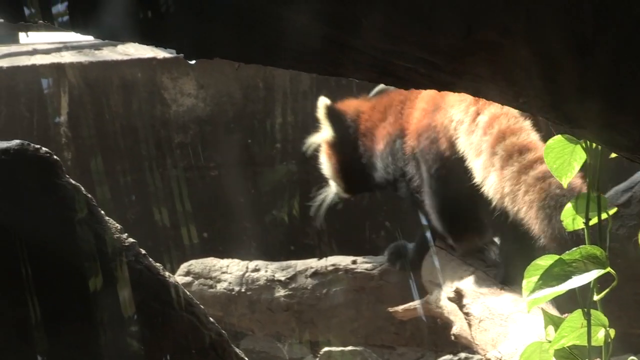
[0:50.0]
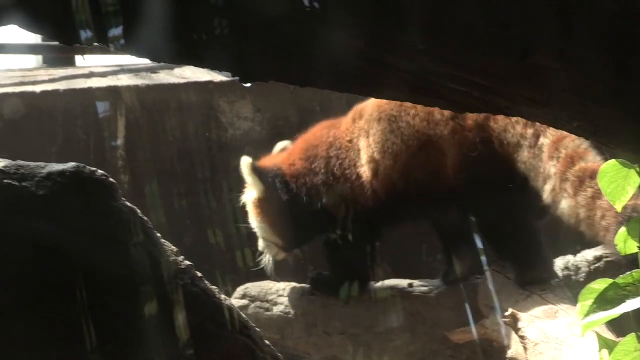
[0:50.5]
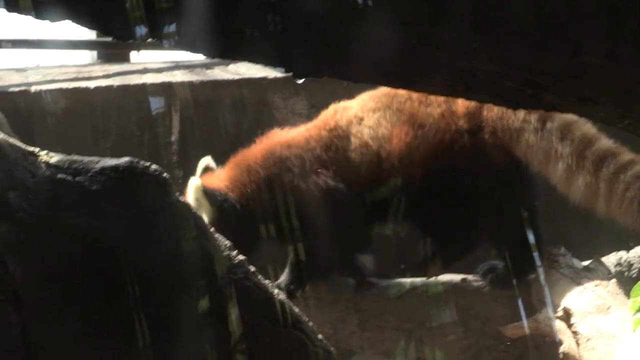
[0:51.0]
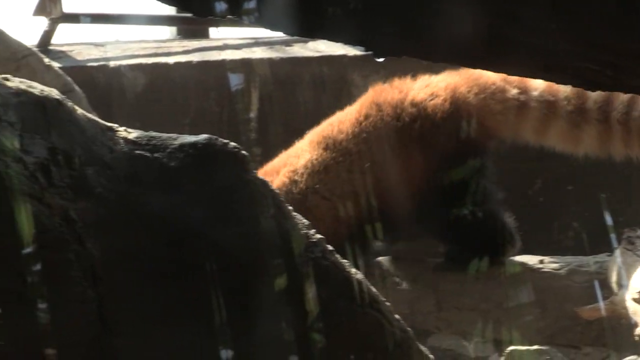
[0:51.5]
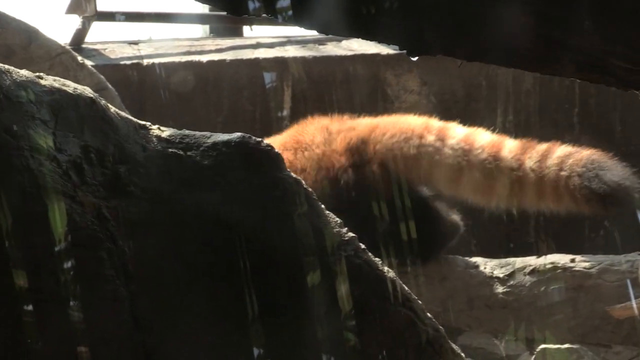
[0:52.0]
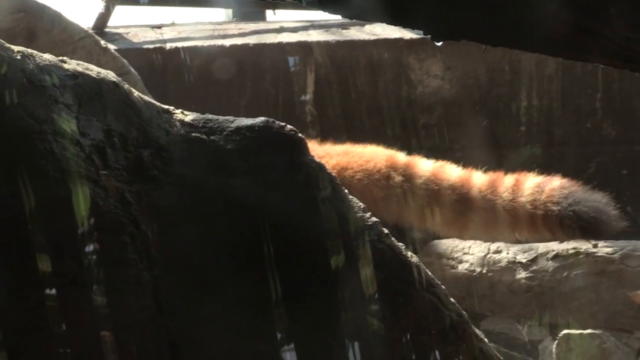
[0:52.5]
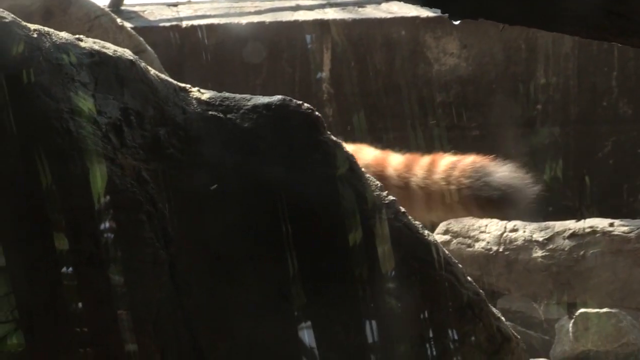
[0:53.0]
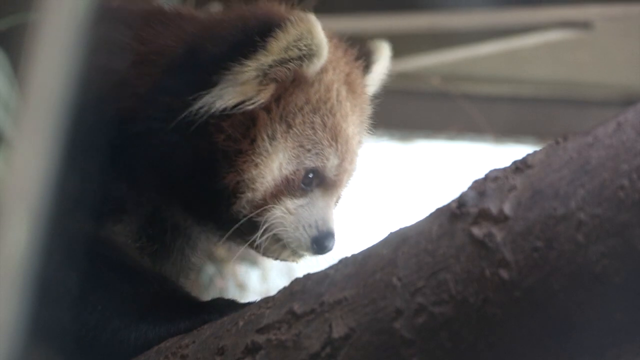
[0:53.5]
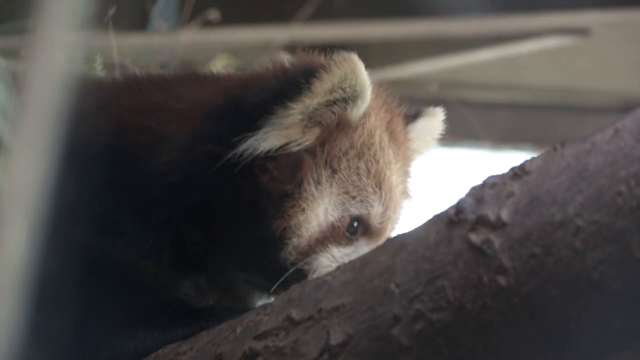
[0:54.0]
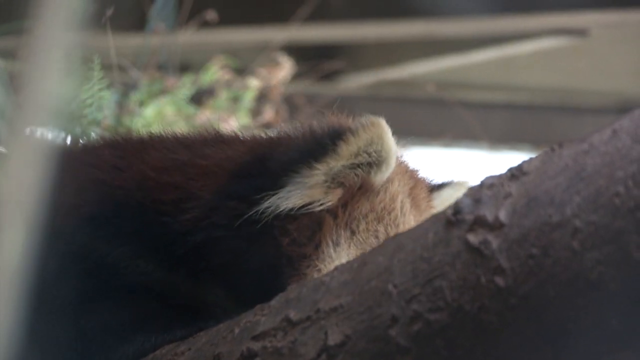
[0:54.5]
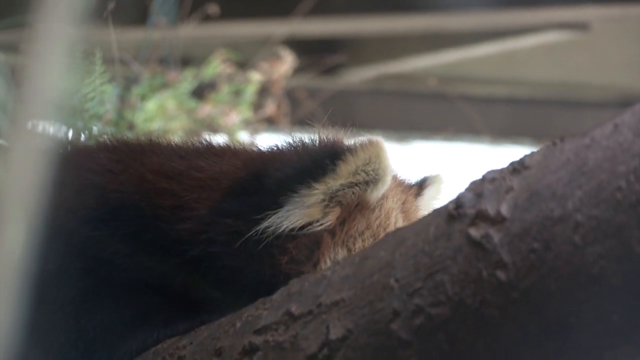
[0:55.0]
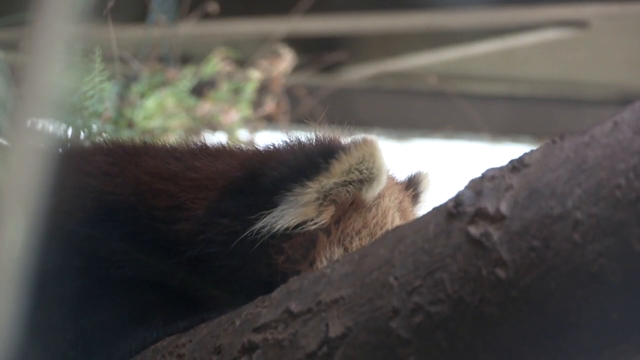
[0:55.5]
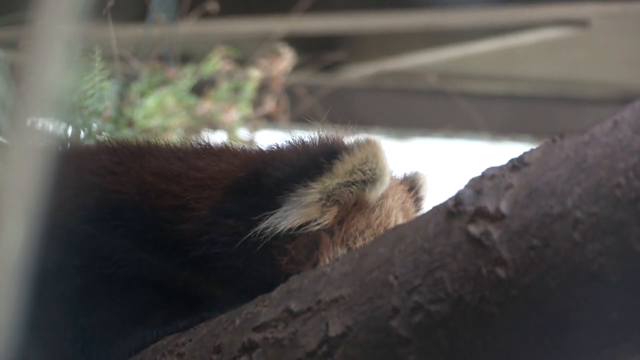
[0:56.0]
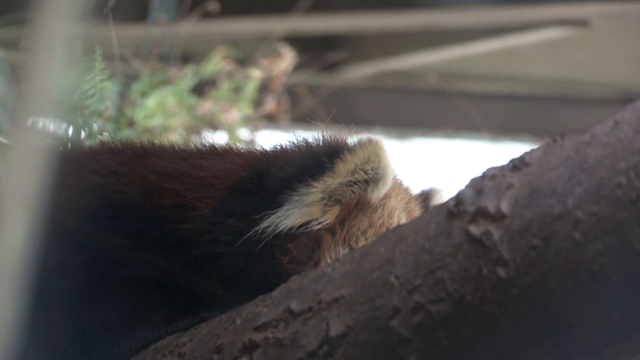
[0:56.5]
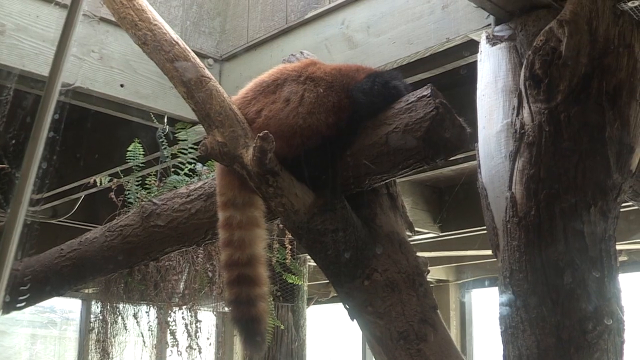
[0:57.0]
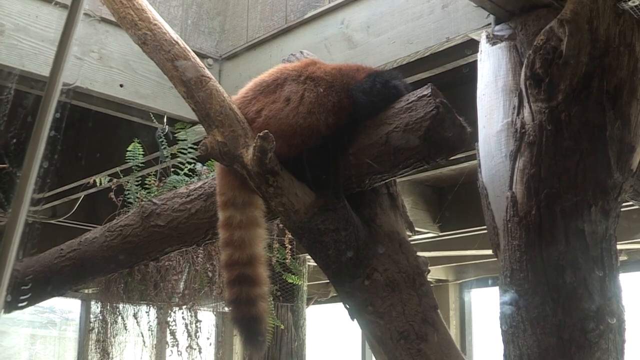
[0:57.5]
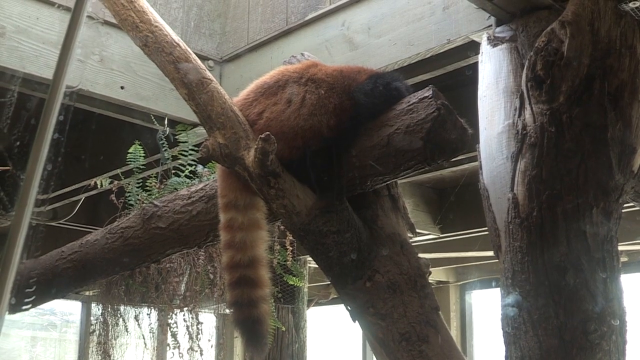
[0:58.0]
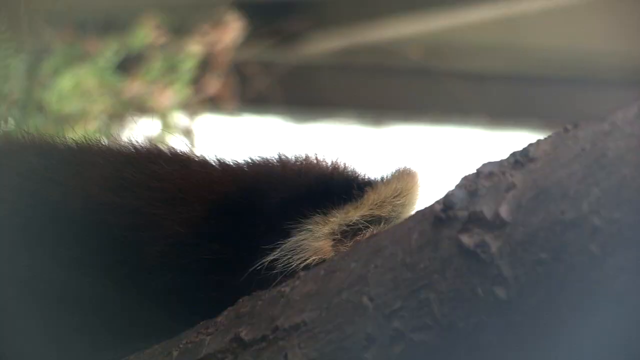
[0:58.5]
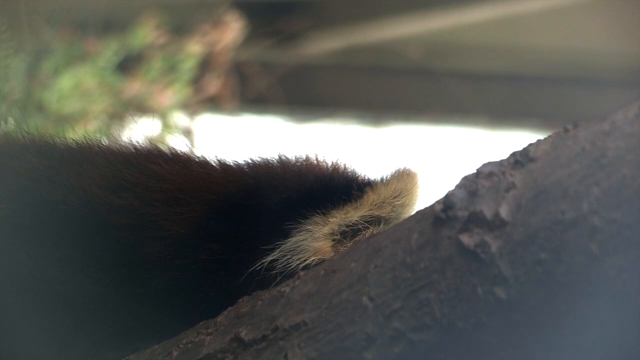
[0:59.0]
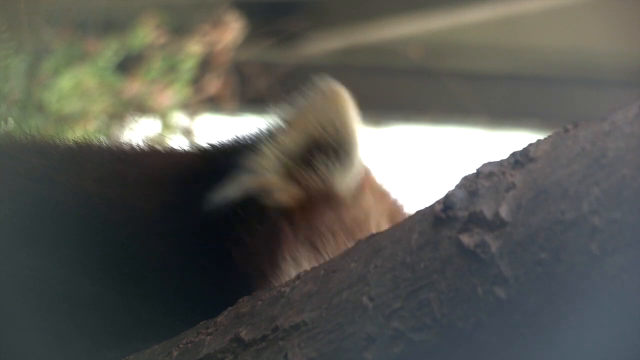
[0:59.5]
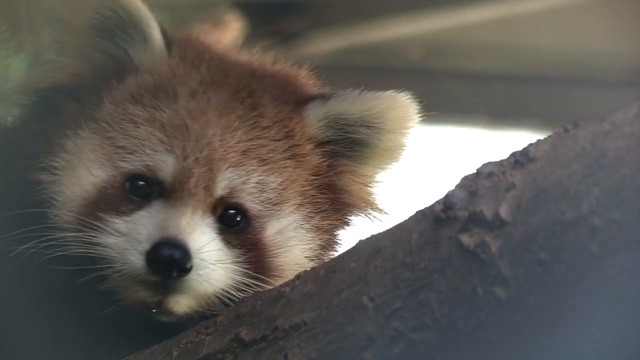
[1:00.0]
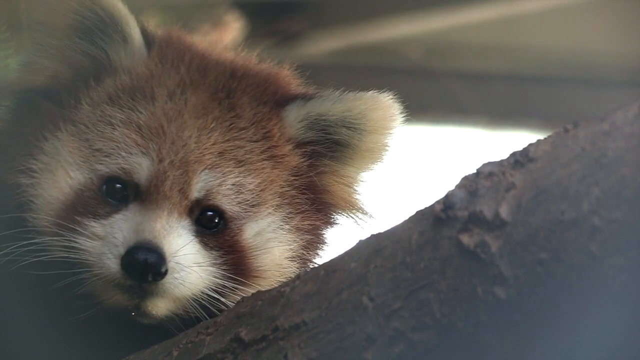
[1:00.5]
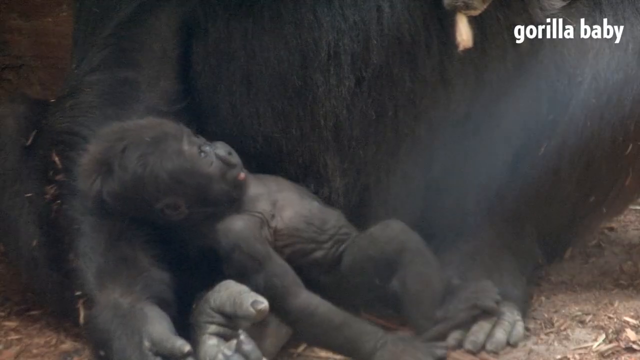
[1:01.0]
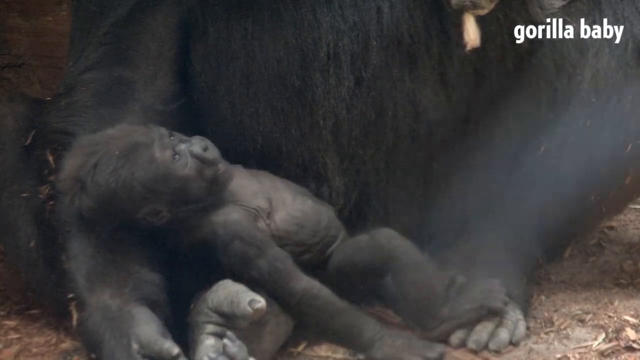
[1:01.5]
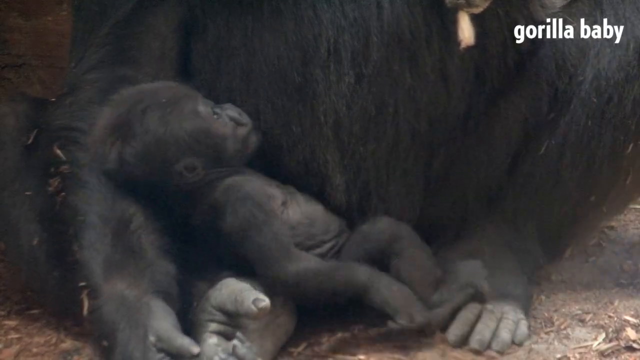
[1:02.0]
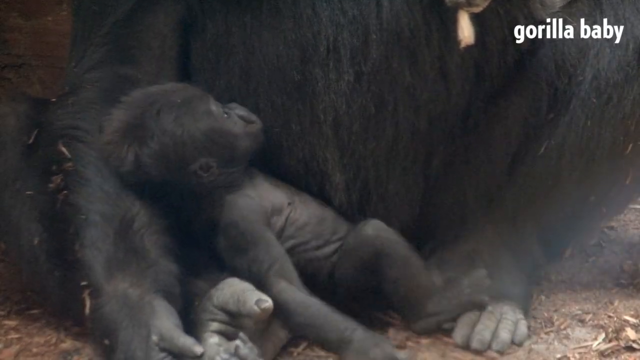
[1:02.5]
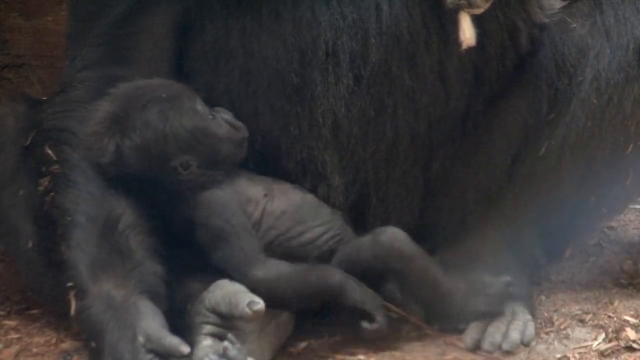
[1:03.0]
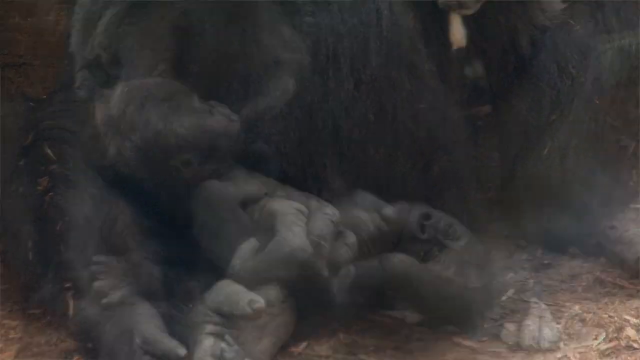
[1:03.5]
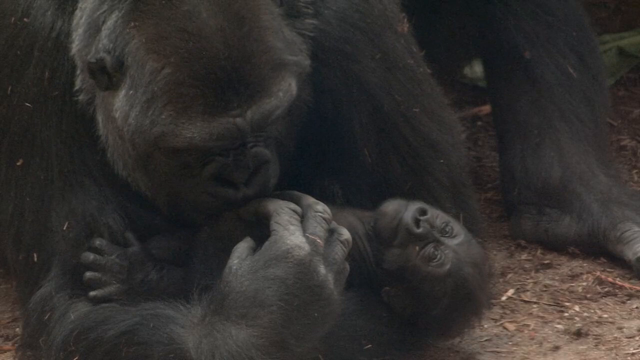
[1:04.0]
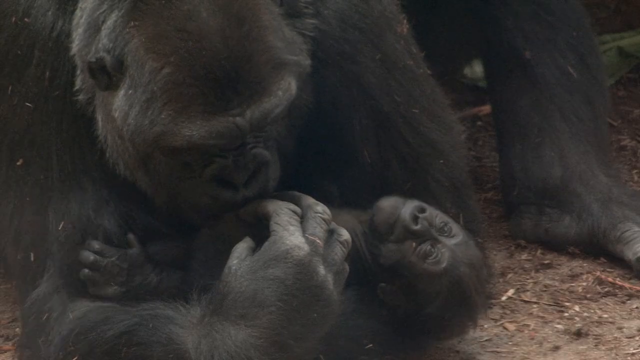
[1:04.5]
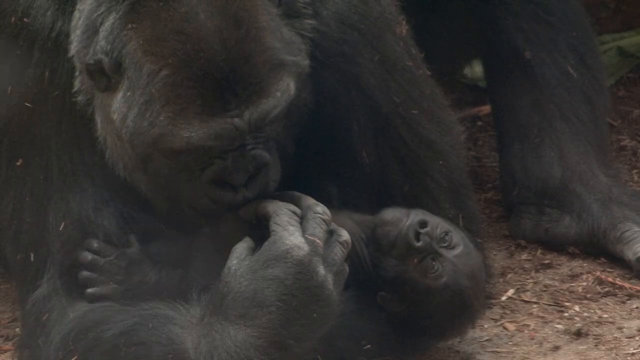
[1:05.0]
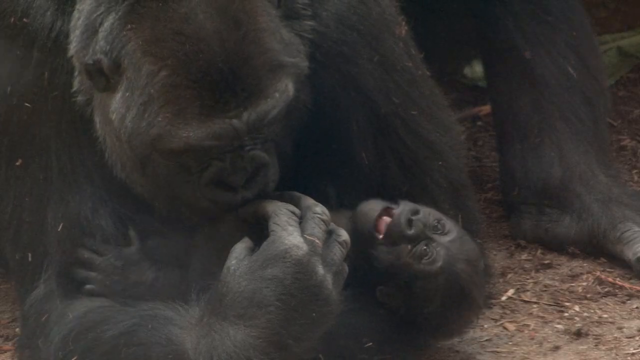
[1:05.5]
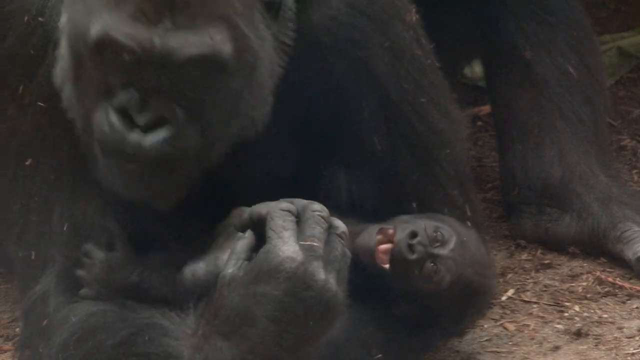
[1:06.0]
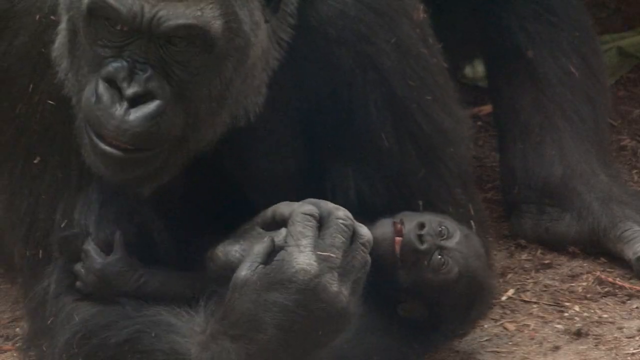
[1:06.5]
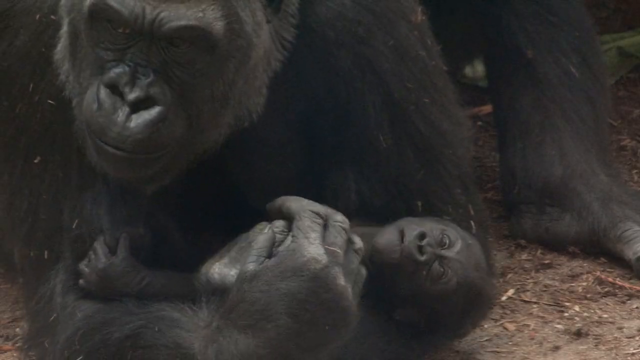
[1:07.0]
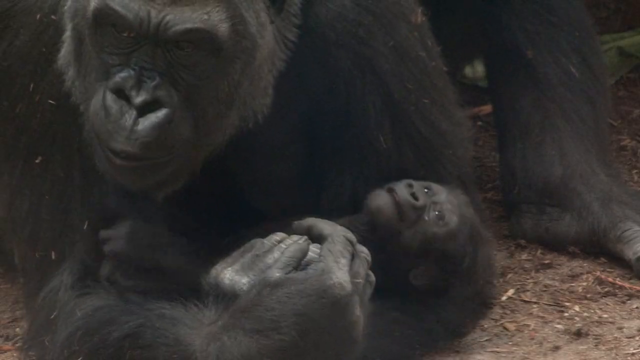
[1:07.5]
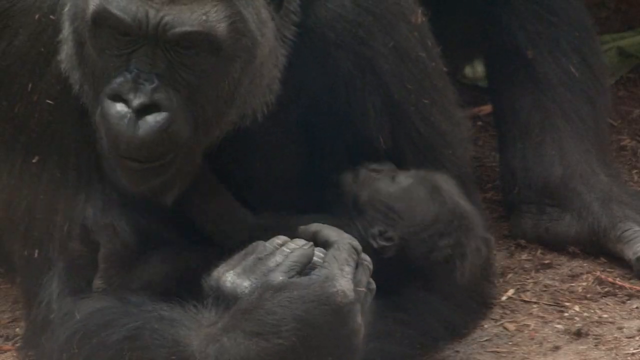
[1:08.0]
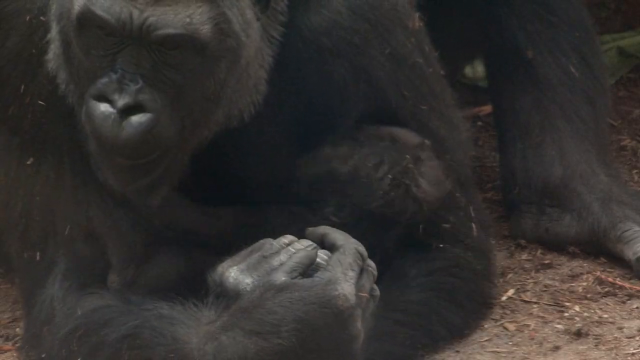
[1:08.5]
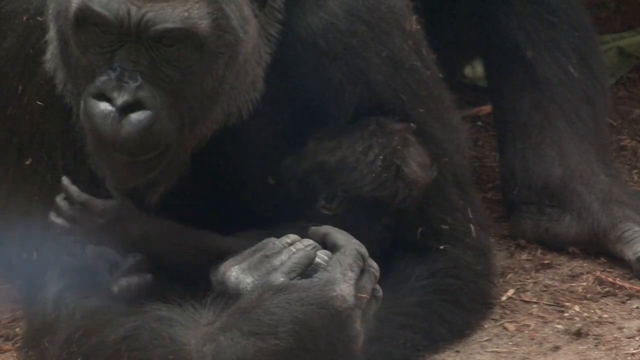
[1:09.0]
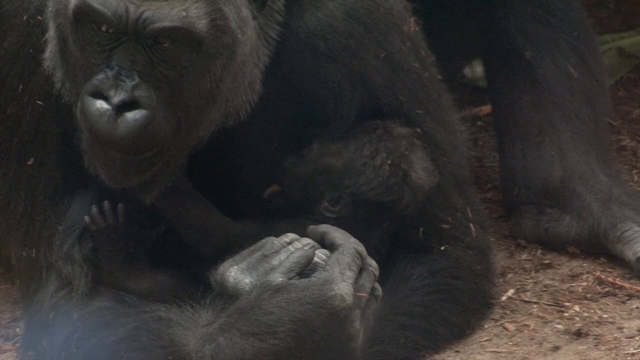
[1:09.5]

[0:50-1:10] The red panda walks along the wooden log, with a plant visible in the scene. Another scene shows the red panda looking down at everything around it. The video then transitions to a mother gorilla holding her baby in her arms. Toward the end, the mother gorilla seems to be embracing and playing with the baby gorilla.